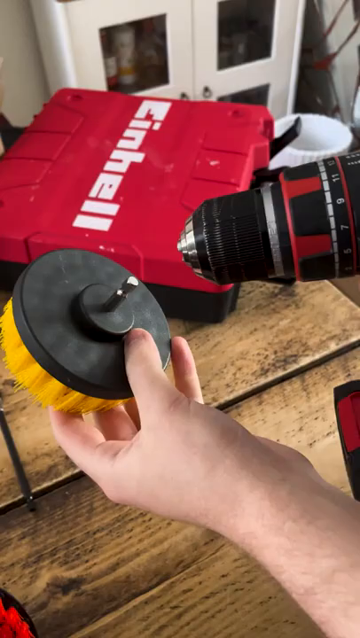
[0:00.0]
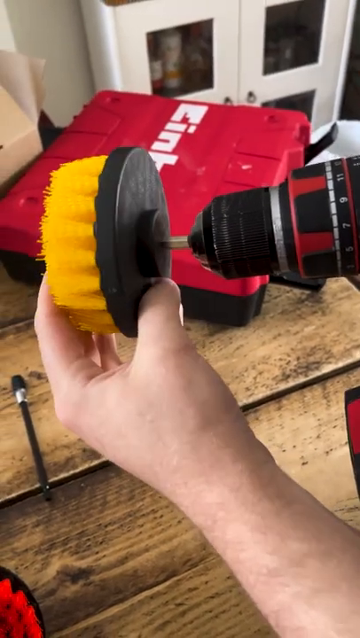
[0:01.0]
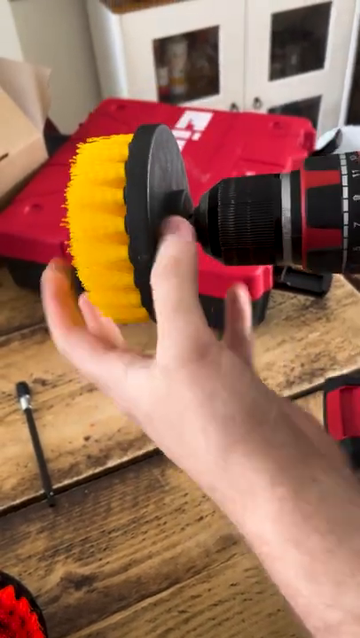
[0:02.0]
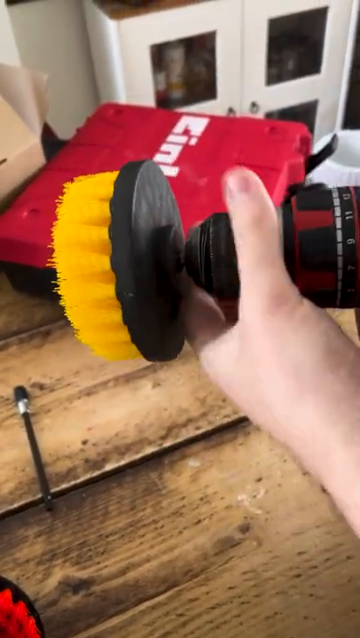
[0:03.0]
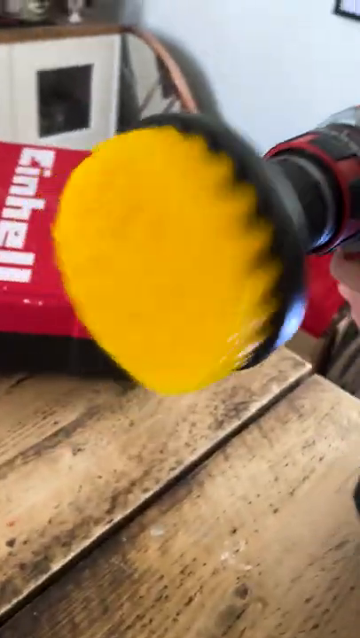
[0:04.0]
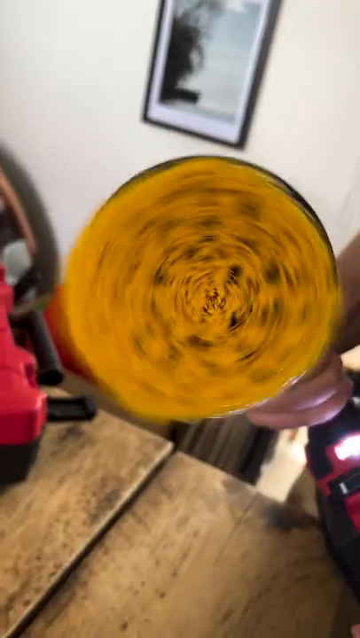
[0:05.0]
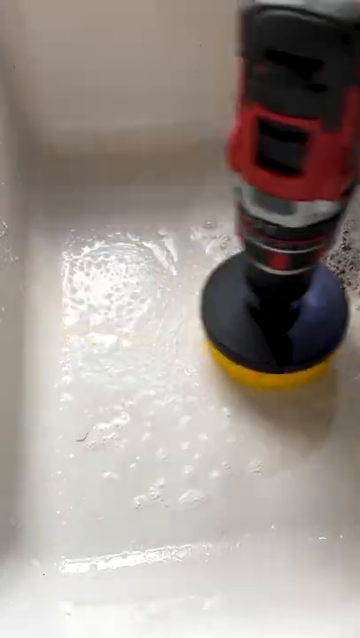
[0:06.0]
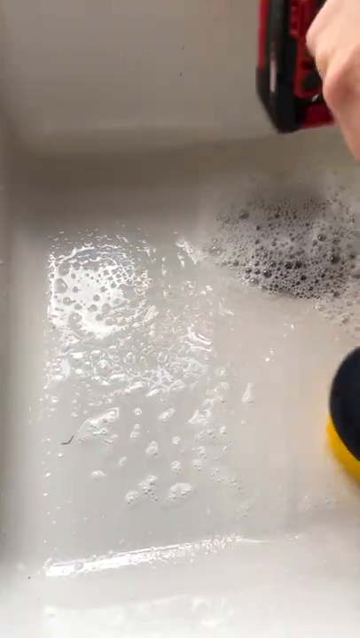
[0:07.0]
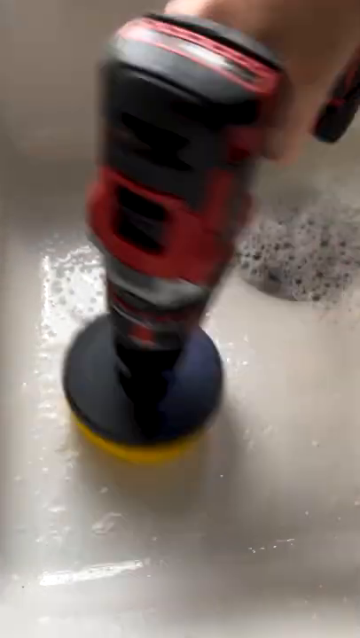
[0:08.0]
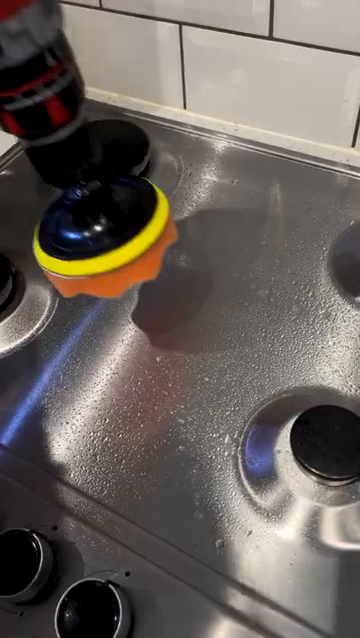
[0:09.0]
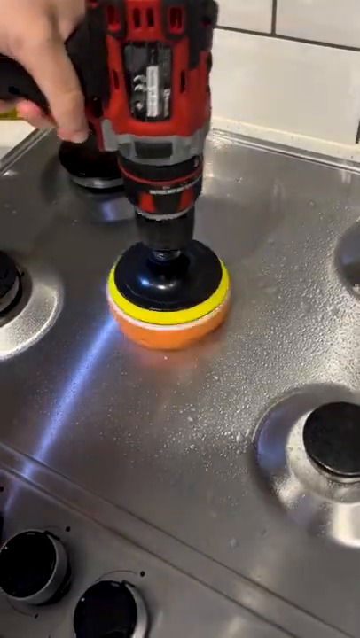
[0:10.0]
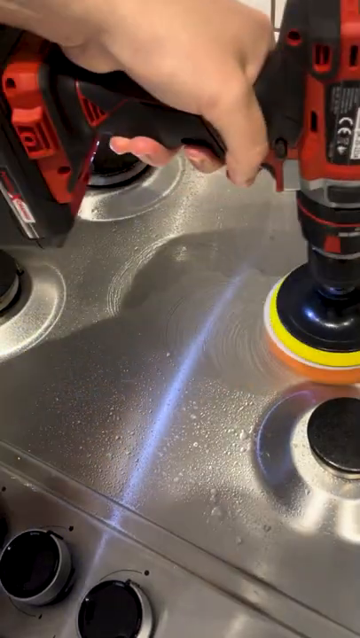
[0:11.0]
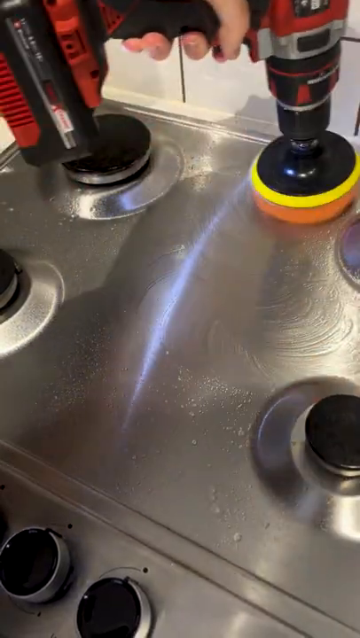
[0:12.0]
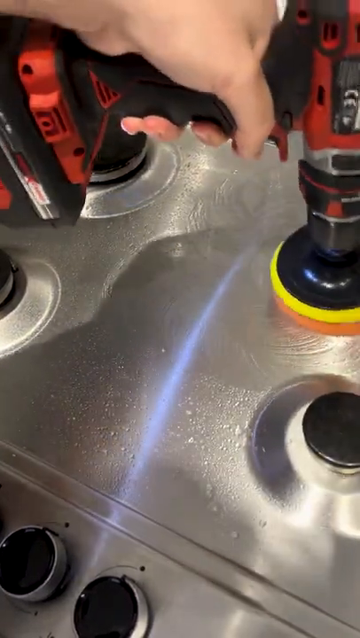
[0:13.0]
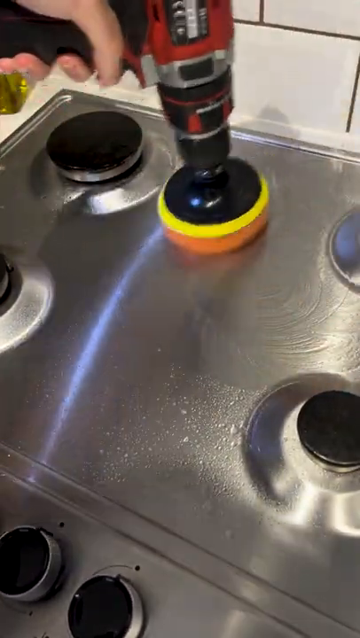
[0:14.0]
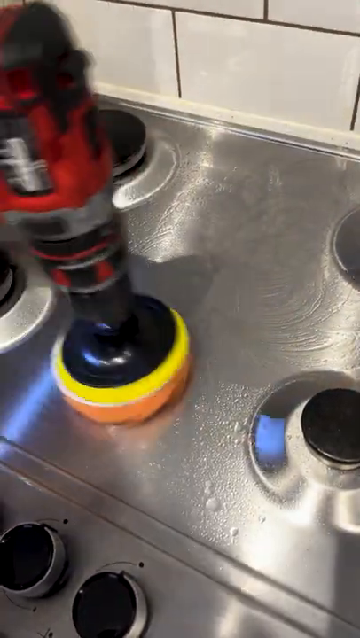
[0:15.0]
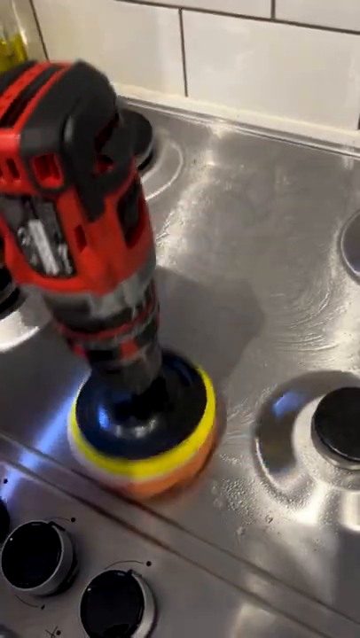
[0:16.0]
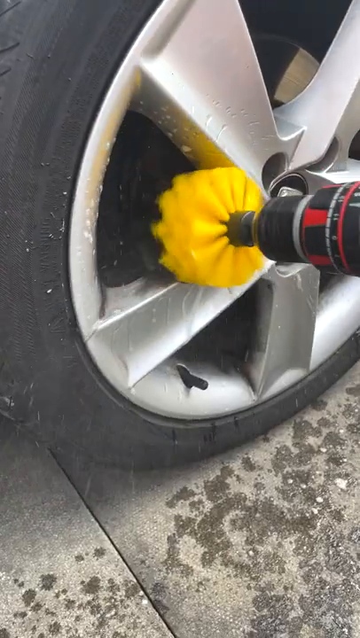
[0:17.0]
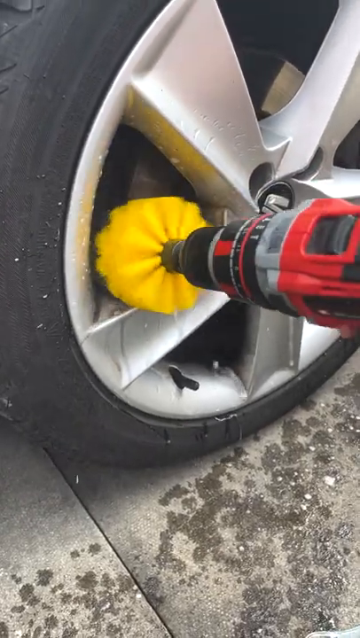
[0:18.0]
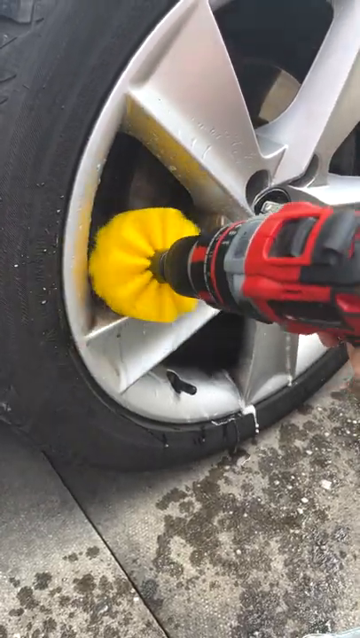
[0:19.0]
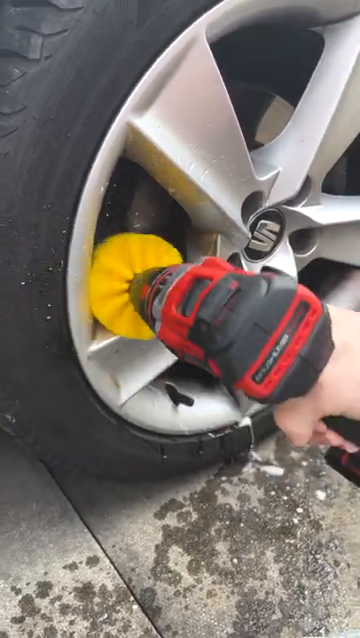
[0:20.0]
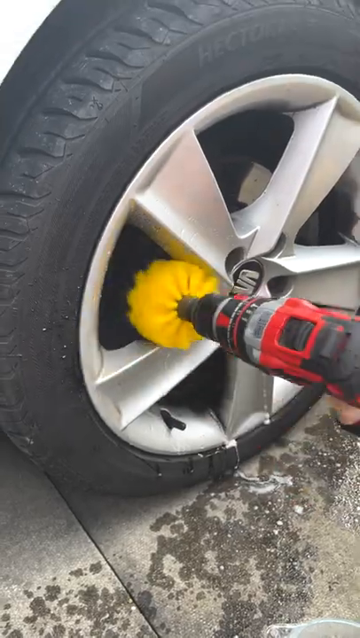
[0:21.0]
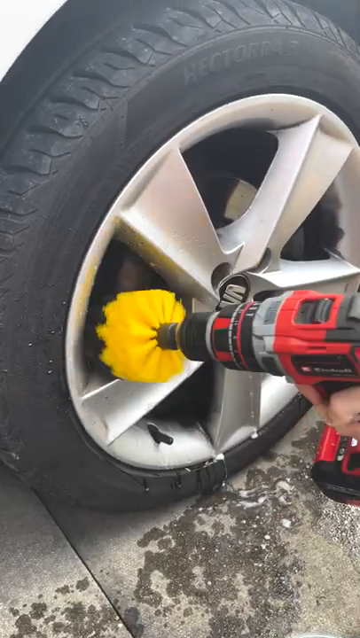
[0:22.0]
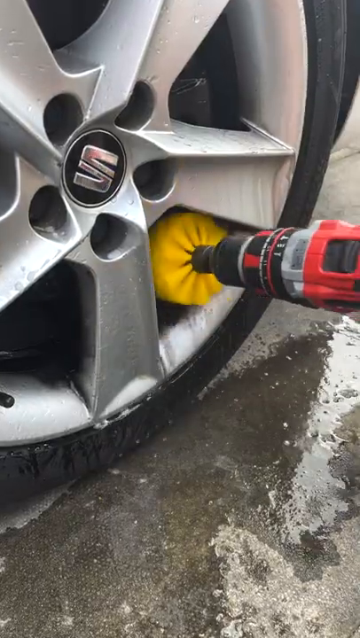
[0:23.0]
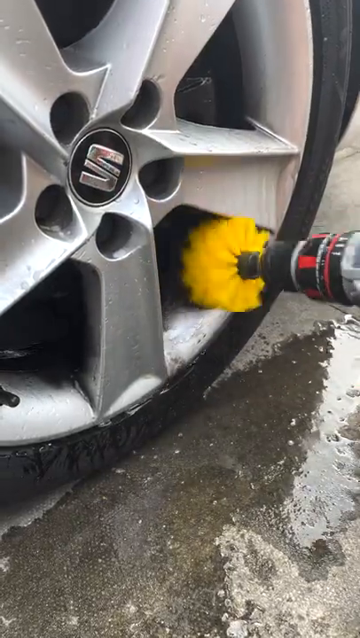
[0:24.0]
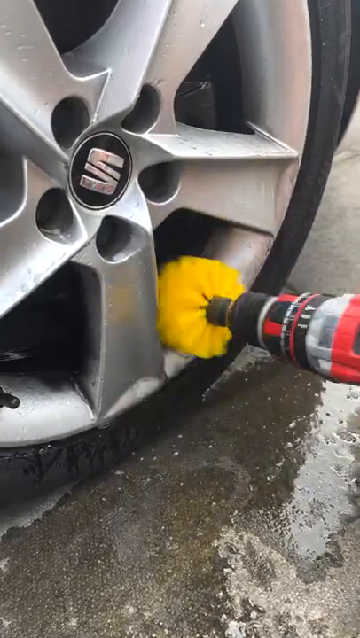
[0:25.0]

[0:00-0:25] The video opens on what looks like a red drill. A person puts a drill brush on the end of the drill, screwing it on; the brush is circular with yellow bristles. After attaching the brush, he points the drill toward the camera and it starts spinning, apparently to test it. The person then uses the red drill with the yellow brush to clean the inside of something white, apparently a sink rather than a bathtub. Next, the person uses the drill brush on the surface of what looks like a stove; he has removed the burner parts from the top and brushes the surface to get it clean. The stove is stainless steel with black knobs. Finally, he cleans the rims of an automobile, which look like five-spoke rims. For this he uses a larger brush that looks like the end of a bathroom brush, going in between the spokes with soap and water and using the drill to get them clean.